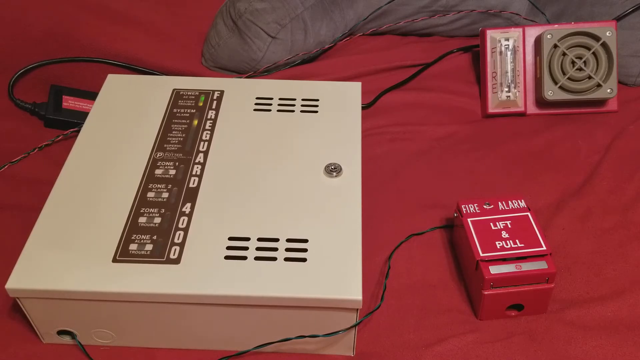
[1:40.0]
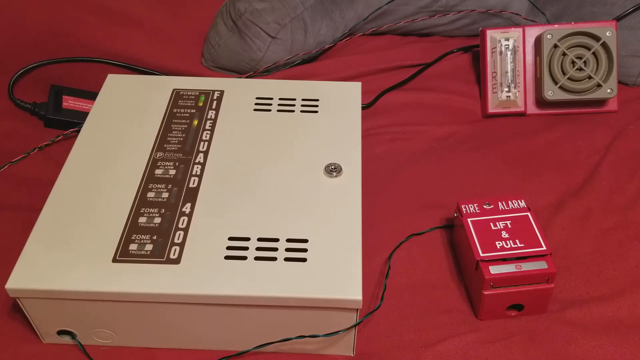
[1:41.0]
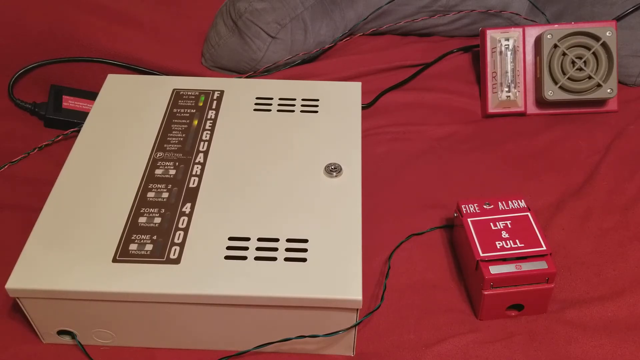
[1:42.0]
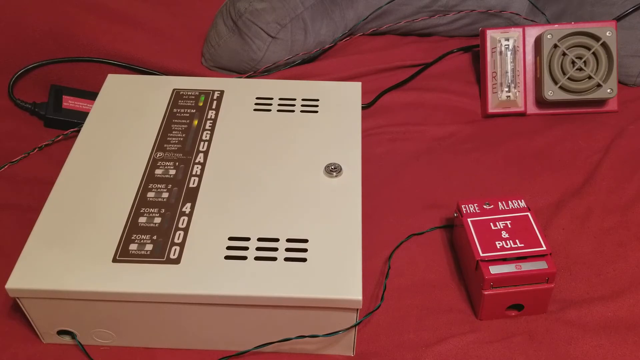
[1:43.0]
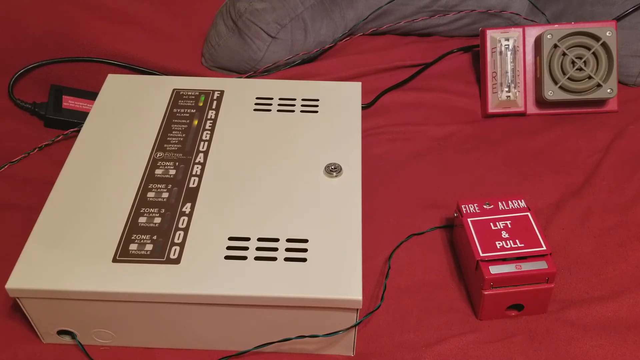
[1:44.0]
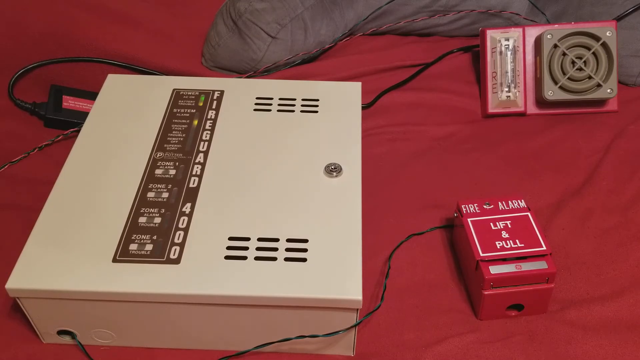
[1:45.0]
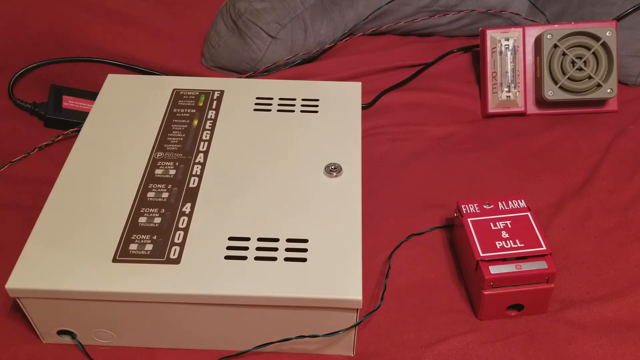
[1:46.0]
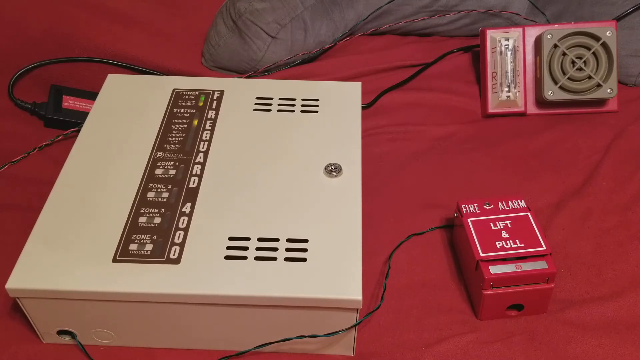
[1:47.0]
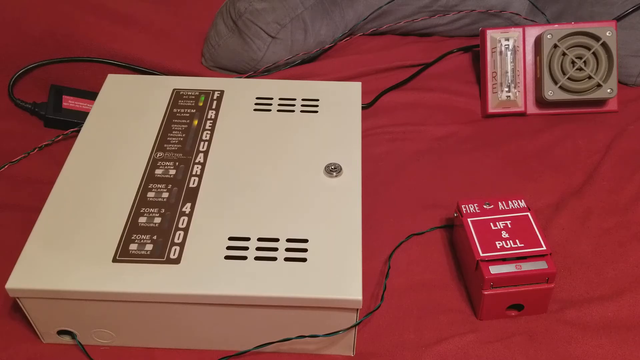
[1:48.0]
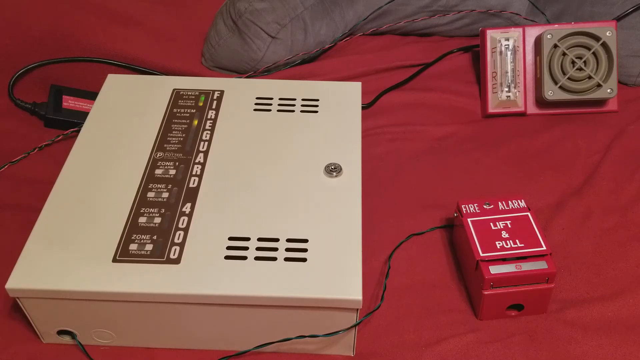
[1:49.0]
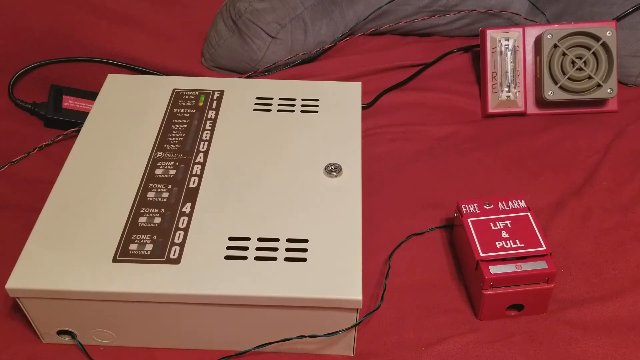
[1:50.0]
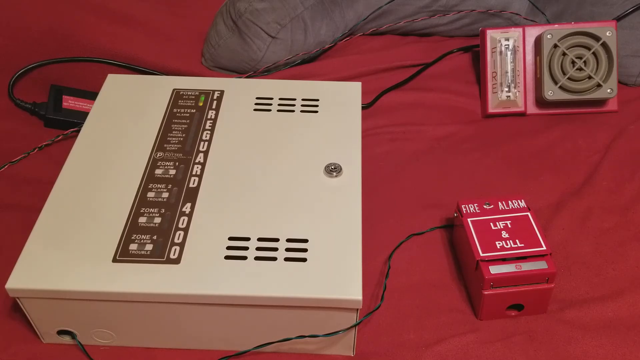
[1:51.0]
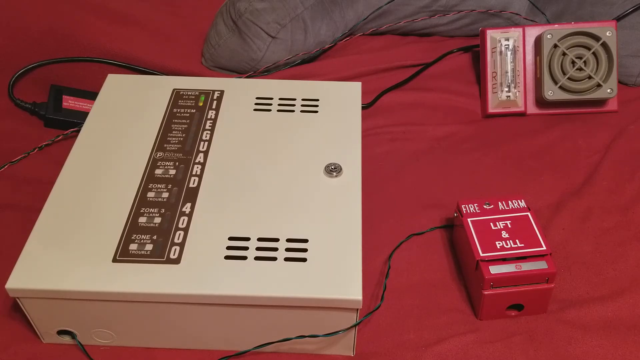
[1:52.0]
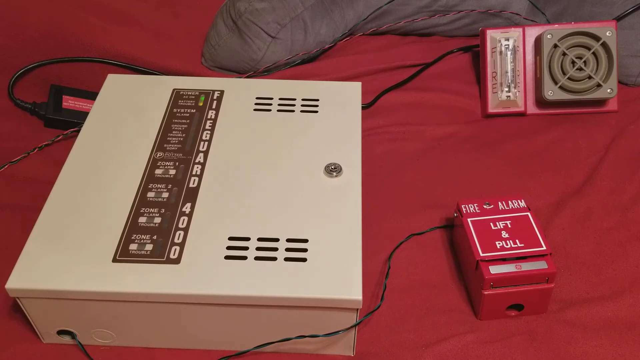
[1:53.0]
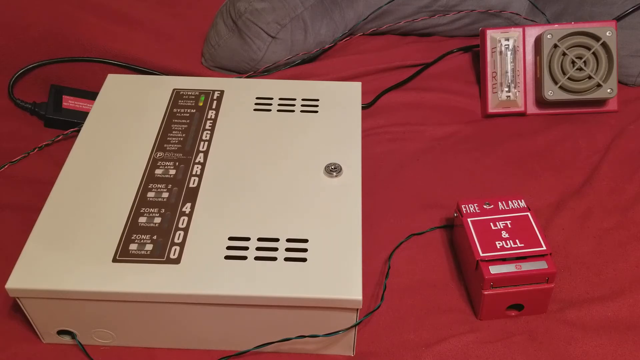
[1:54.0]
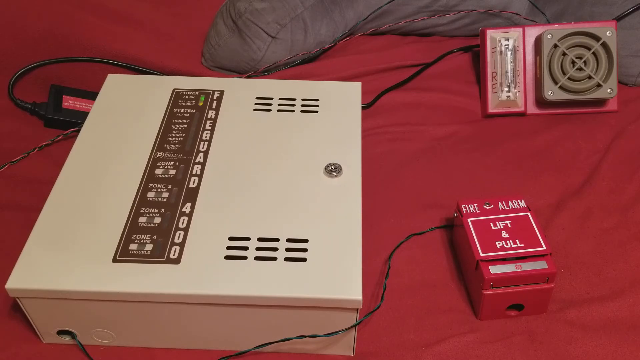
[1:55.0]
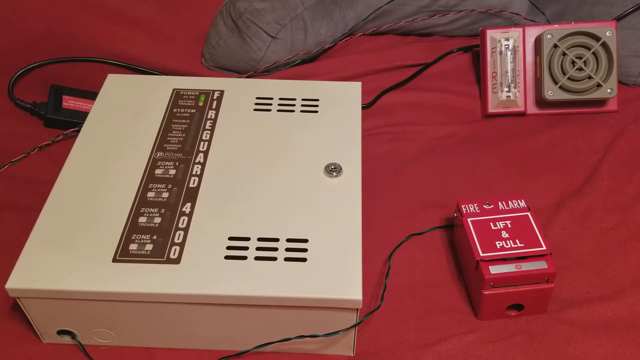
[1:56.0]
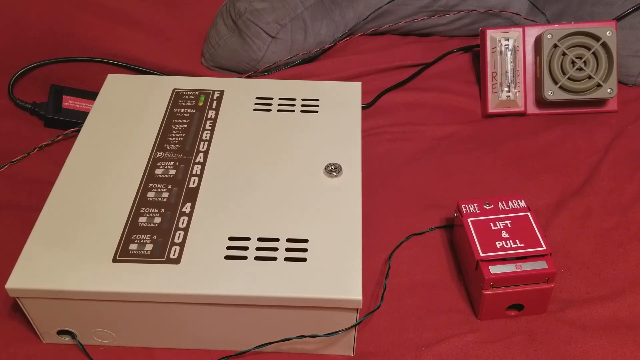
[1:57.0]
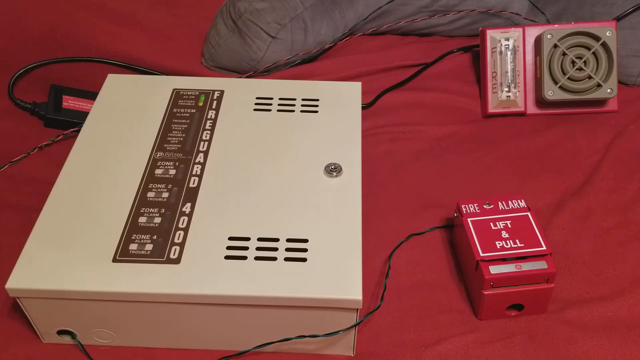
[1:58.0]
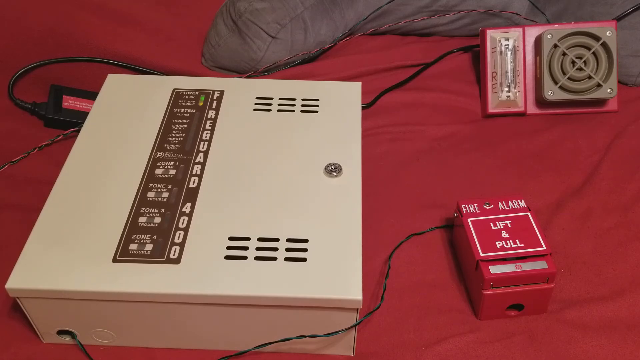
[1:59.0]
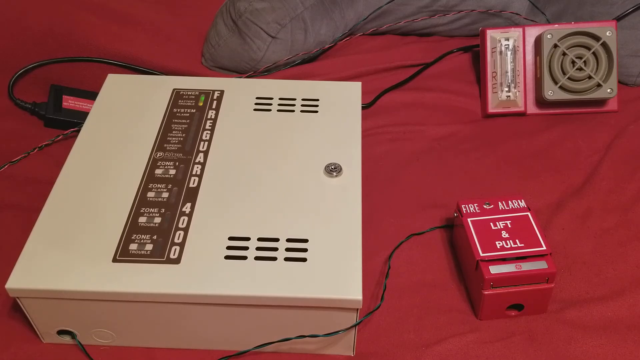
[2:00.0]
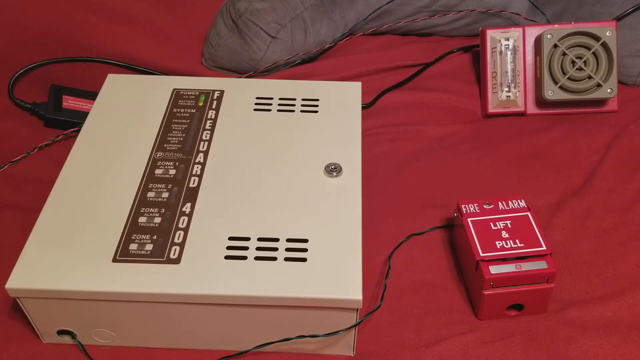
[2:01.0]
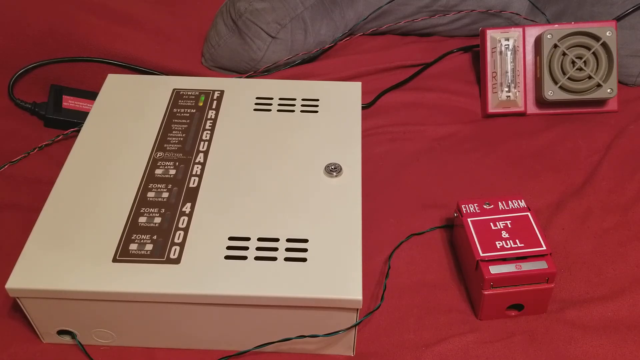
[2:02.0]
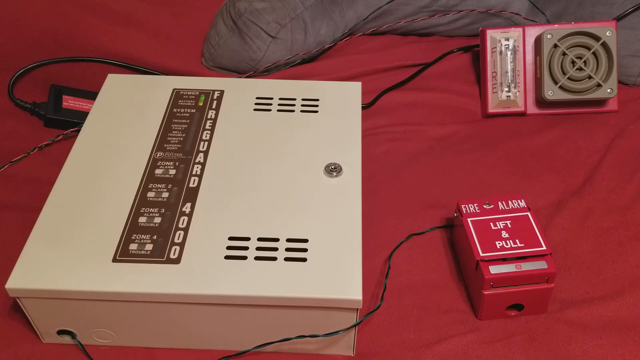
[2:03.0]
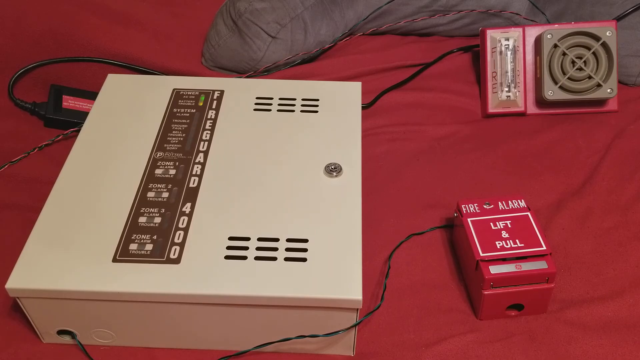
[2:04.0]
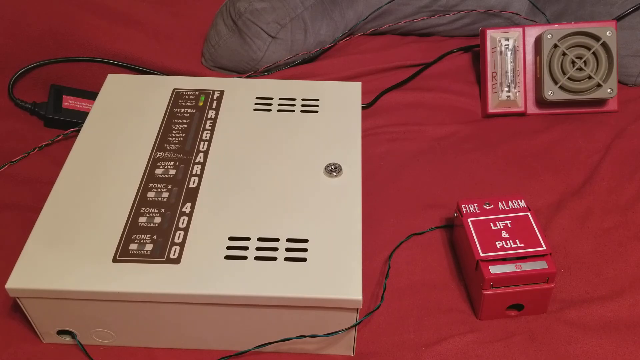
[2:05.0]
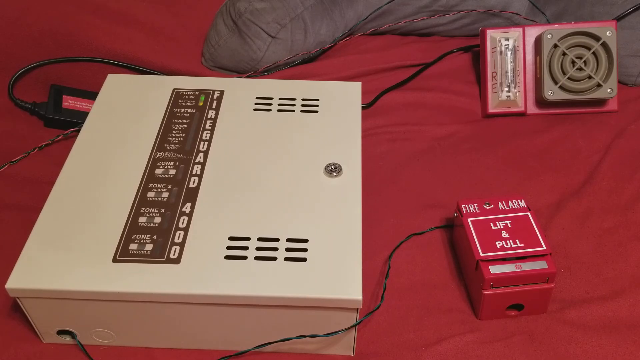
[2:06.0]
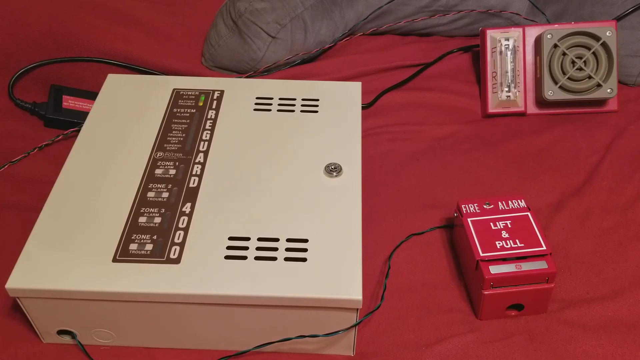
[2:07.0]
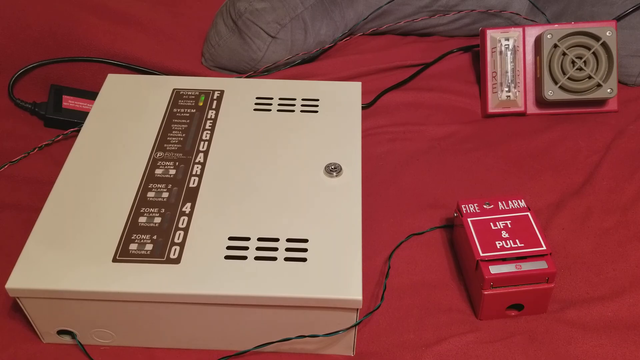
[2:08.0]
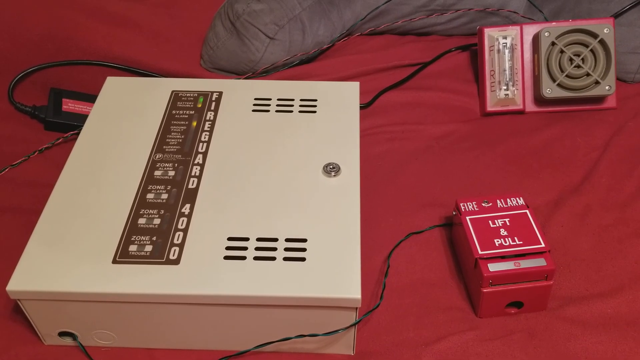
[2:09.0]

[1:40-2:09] The beige metal main box remains with its power lights constantly on and the yellow system light flashing; the box has presumably been reset. Nothing else happens. The box has two air vents on its right side, one at the top and one at the bottom, and a keyhole on the right, almost like the kind on a safety deposit box. The setup appears to be placed on perhaps some kind of bed, very soft, with a red sheet in the background. Another grey soft structure that could be a duvet is partially visible at the very top, almost to the right, cut off. To the left there appears to be a power unit or power cable of sorts: a blocky power unit with a thicker cable coming out of it, just above the box but almost underneath it, to the left.